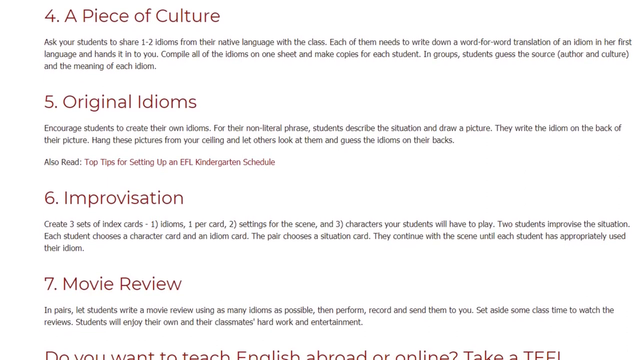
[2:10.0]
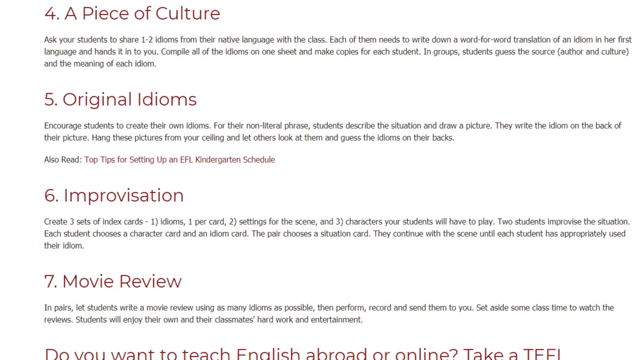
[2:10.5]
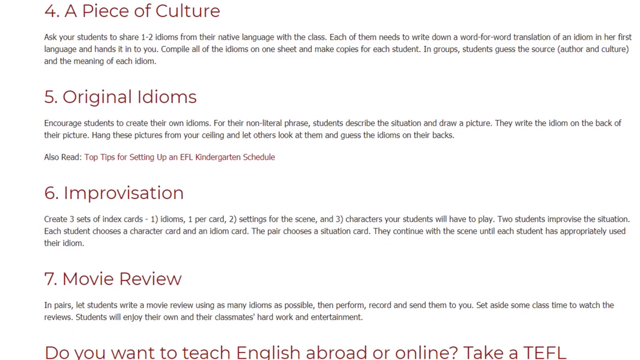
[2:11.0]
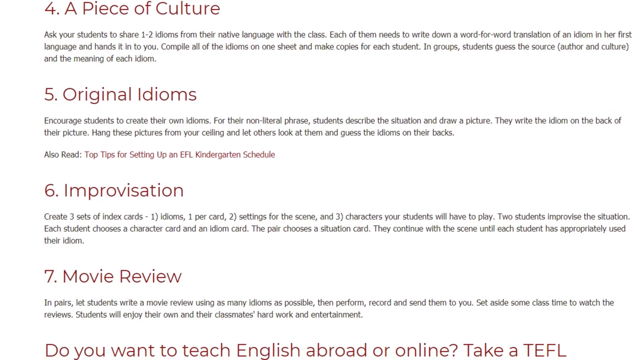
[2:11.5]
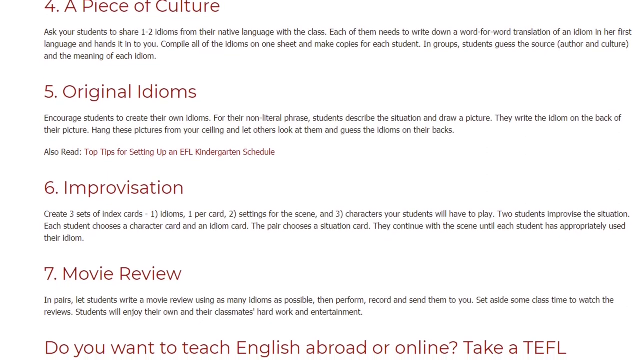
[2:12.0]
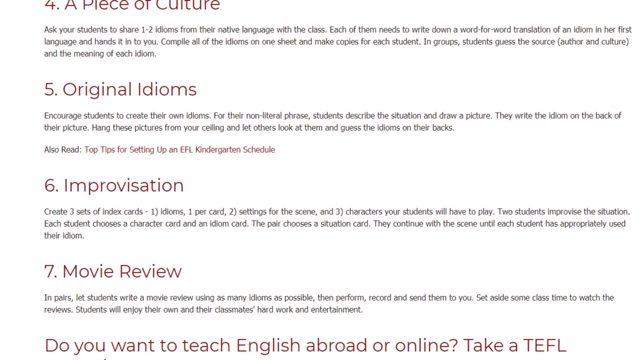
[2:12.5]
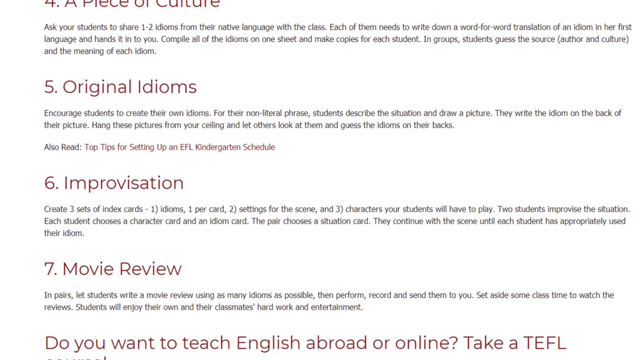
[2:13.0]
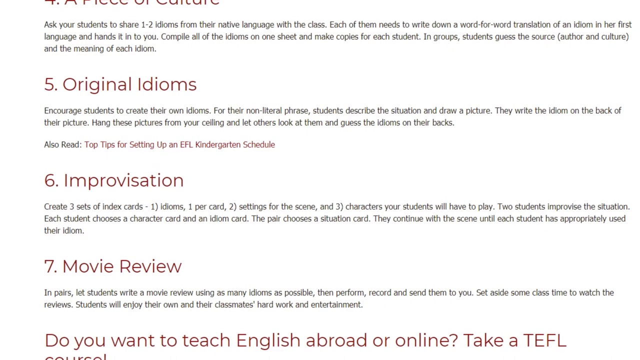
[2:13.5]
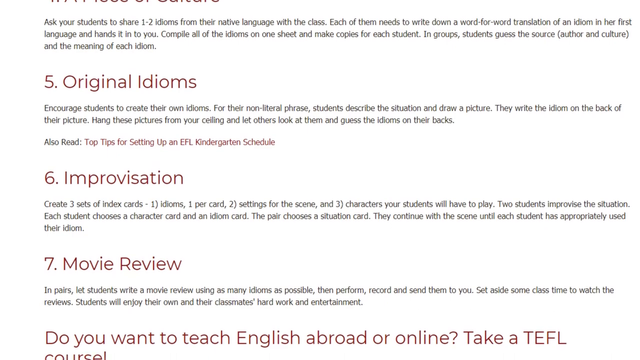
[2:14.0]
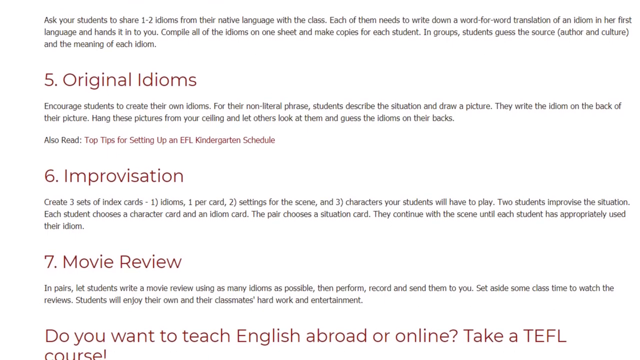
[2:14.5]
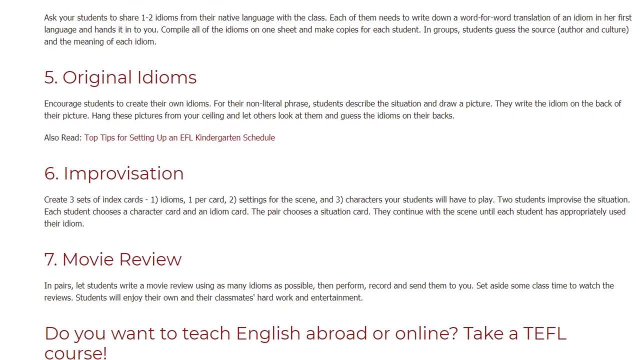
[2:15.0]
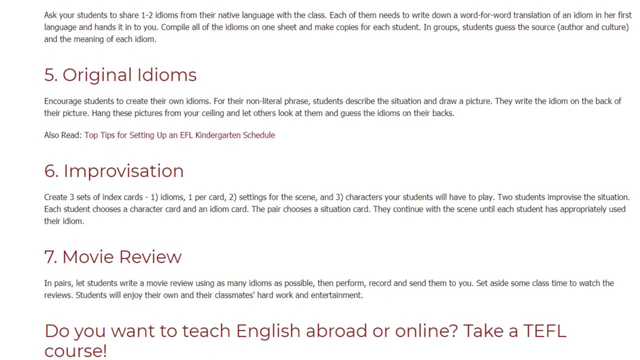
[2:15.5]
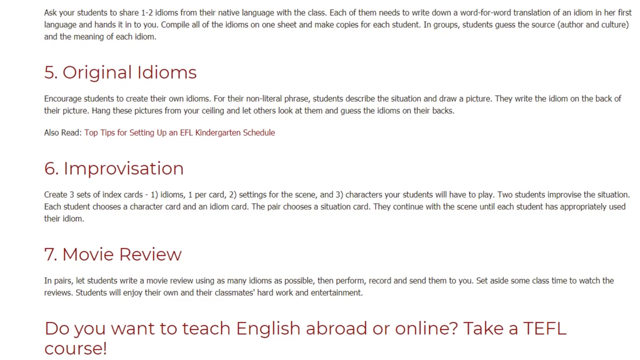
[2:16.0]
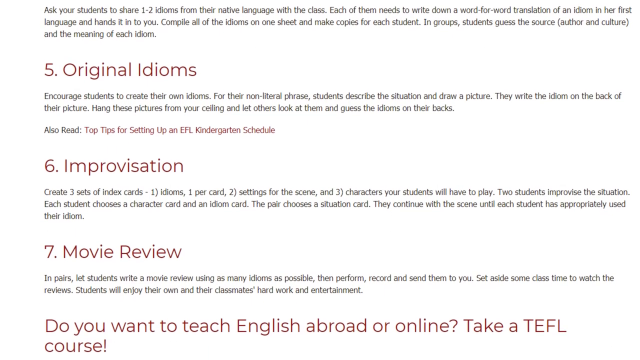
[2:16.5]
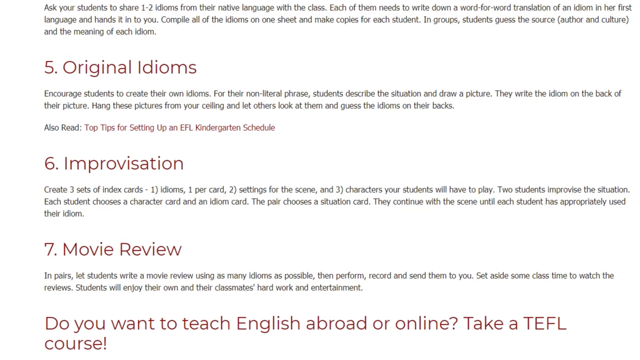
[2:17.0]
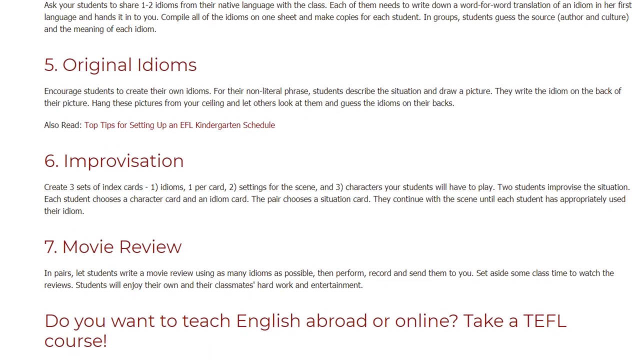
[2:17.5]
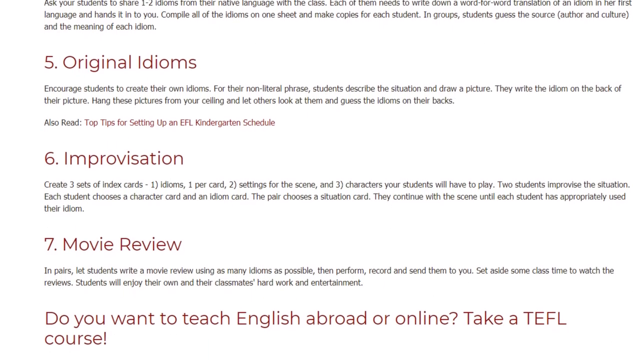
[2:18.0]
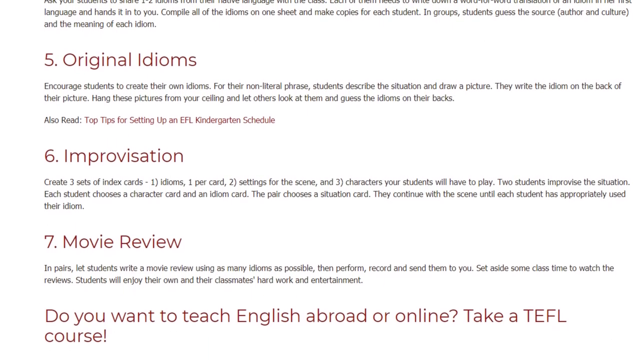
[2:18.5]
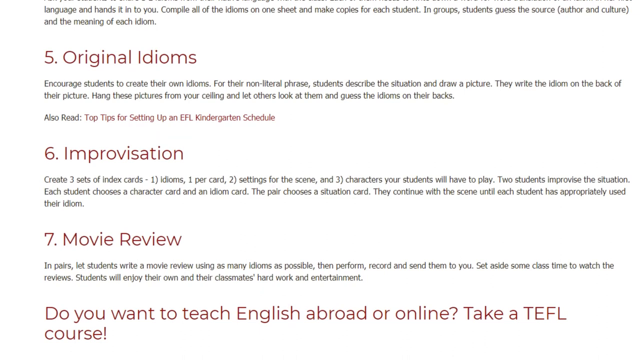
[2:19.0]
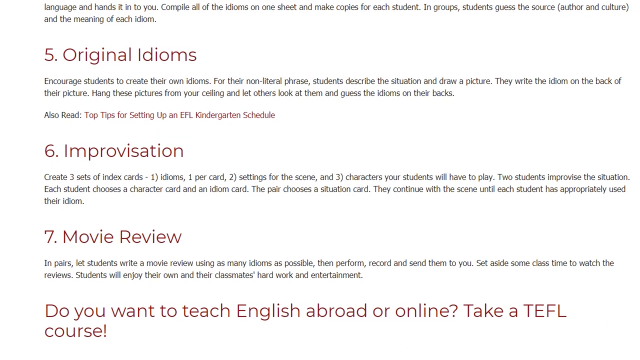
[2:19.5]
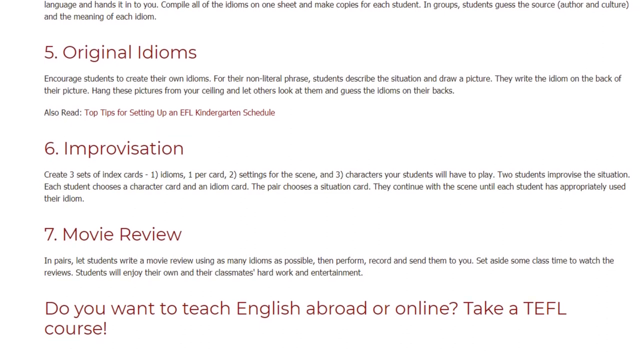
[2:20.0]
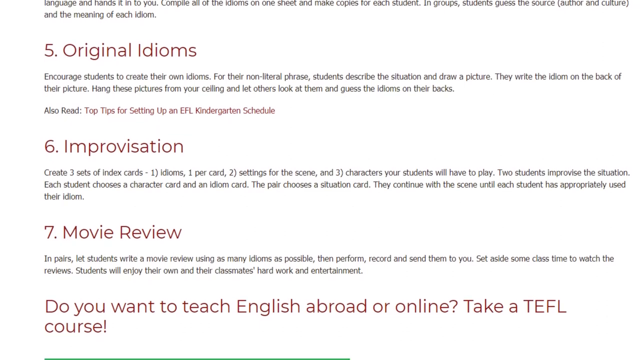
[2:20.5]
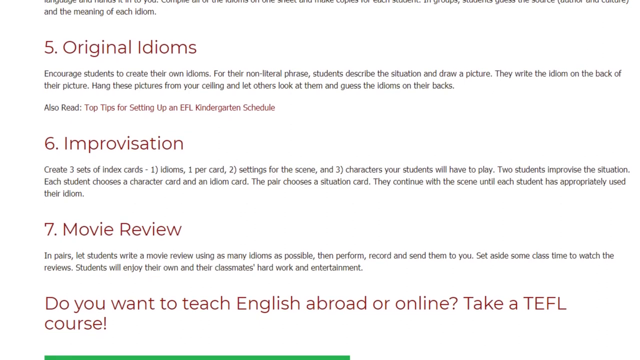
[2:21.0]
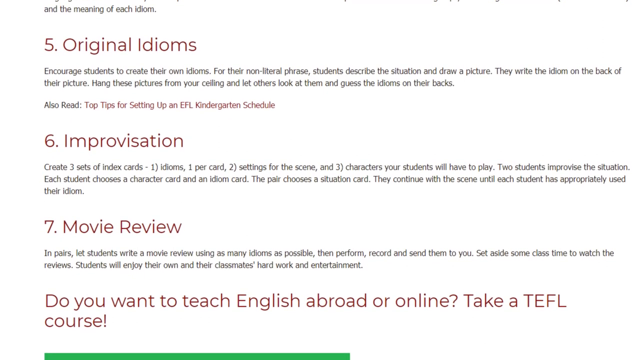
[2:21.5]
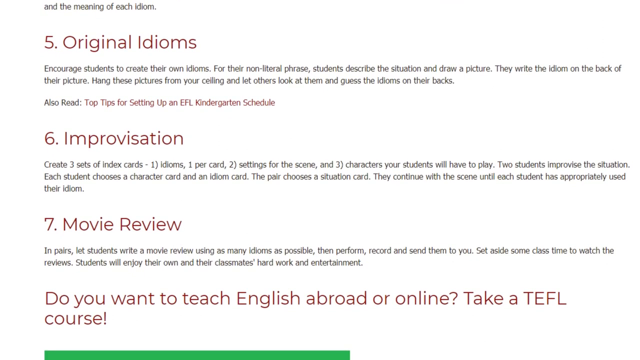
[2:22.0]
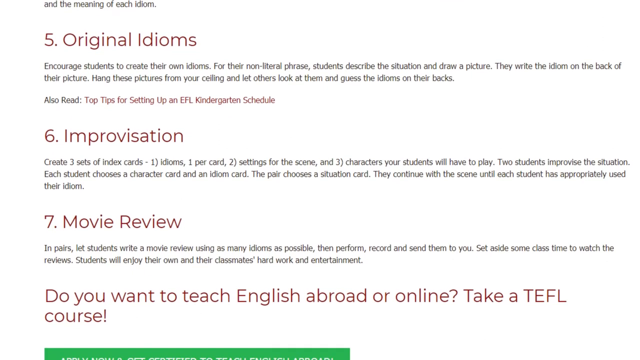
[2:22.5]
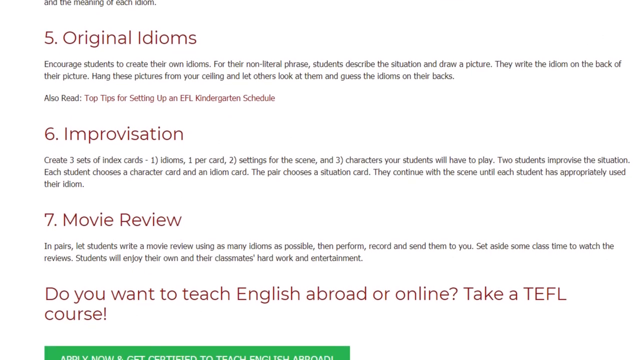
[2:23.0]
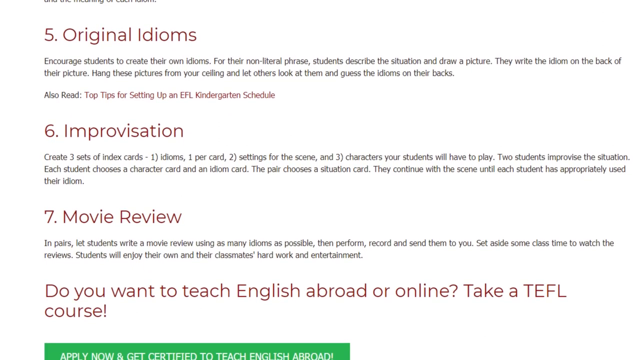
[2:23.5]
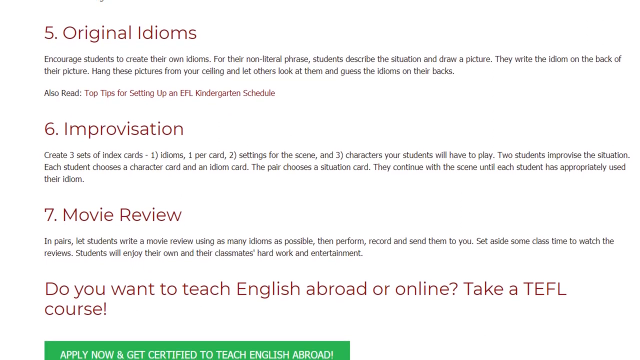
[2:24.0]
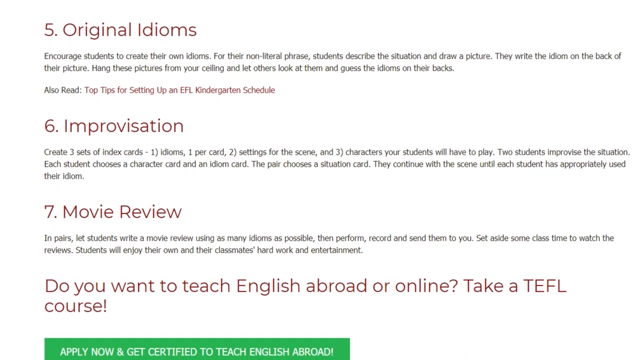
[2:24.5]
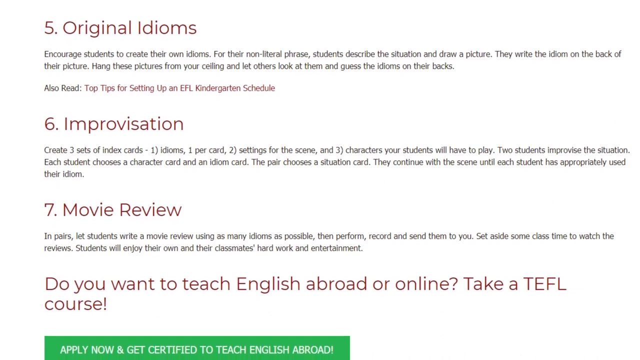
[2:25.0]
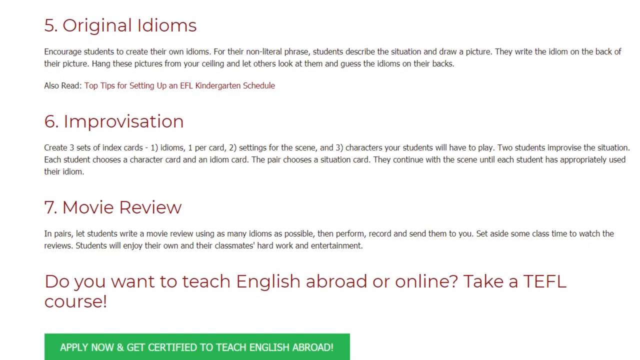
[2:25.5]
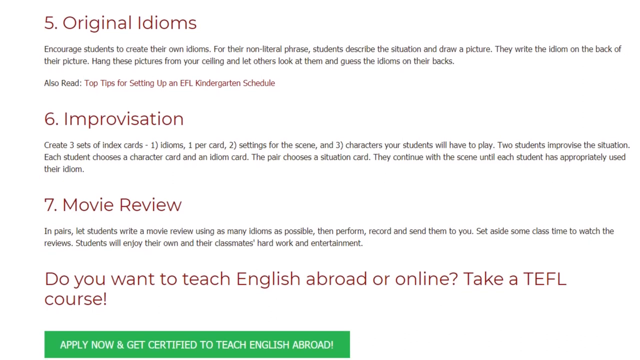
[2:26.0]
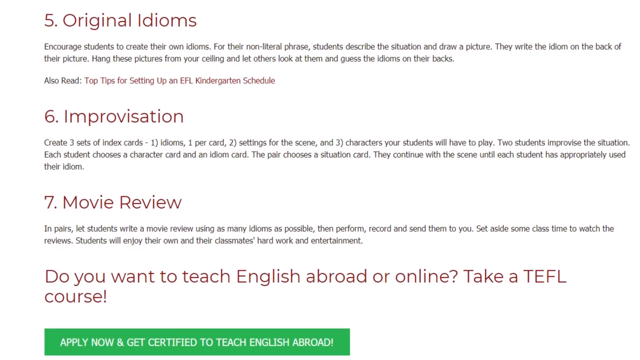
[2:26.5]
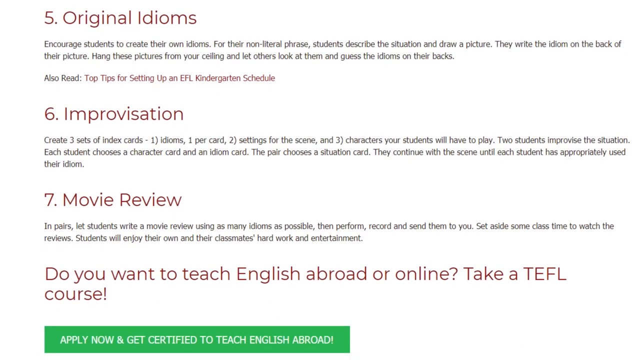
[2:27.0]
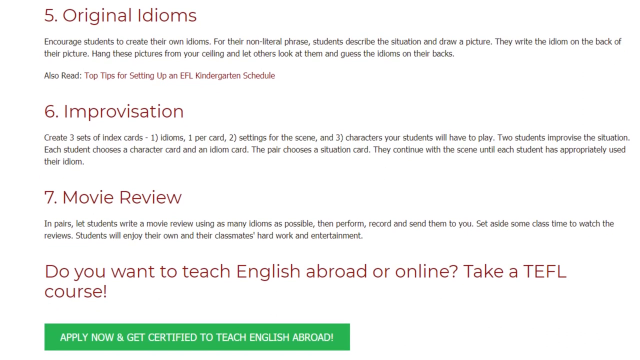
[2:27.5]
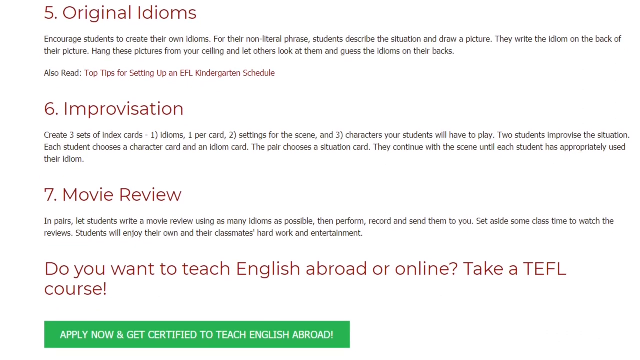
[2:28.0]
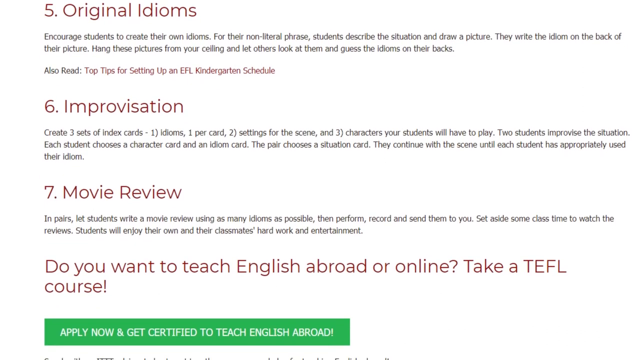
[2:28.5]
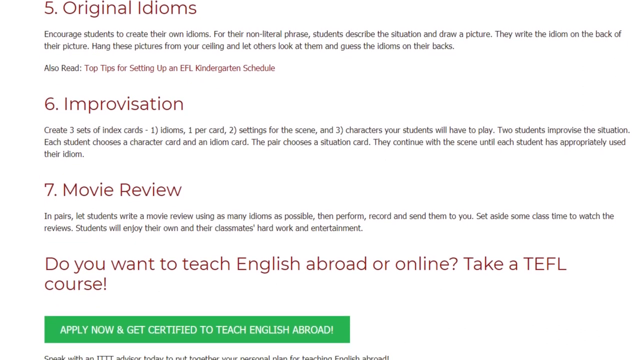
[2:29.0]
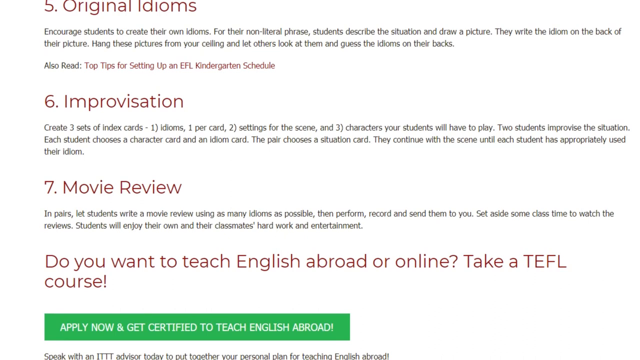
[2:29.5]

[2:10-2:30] The video scrolls down a page of strategies for teaching idioms. At the top is strategy number four, "a piece of culture": "Ask your students to share one to two idioms from their native language with the class. Each of them needs to write down a word-for-word translation of an idiom in her first language and hands it in to you. Compile all the idioms on one sheet and make copies for each student. In groups students guess the source, the author, and culture and the meaning of each idiom." Strategy number five, "original idioms," says: "Encourage students to create their own idioms for their non-literal phrase. Students describe the situation and draw a picture. They write the idiom on the back of their picture. Hang these pictures from your ceiling and let others look at them and guess the idioms on their backs." The sixth strategy, "improvisation," says "create three sets of index cards" followed by three steps: "1) idioms one per card, 2) settings for the scene, and 3) characters your students will have to play. Two students improvise the situation. Each student chooses a character card and an idiom card. The pair chooses a situation card. They continue with the scene until each student has appropriately used their idiom." Strategy number seven, "movie review," appears next, described below as: "In pairs let students write a movie review using as many idioms as possible then perform, record and send them to you. Set aside some class time to watch the reviews. Students will enjoy their own and their classmates hard work and entertainment." At the bottom of the screen, red text says "Do you want to teach English abroad or online? Take a TEFL course."